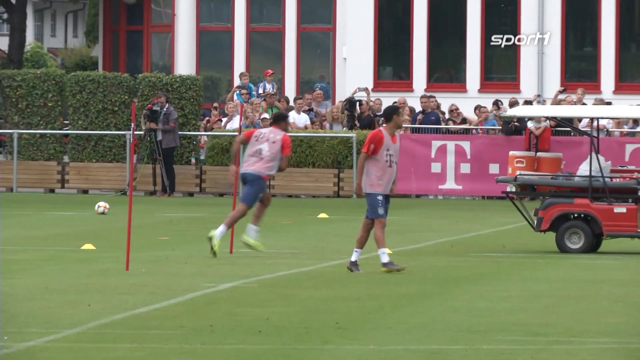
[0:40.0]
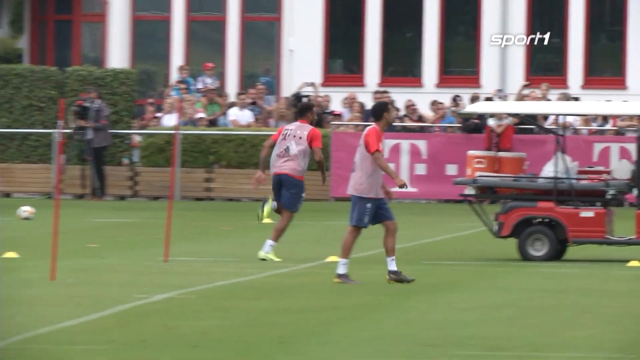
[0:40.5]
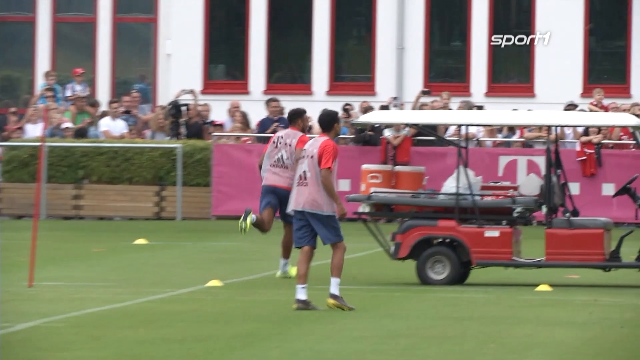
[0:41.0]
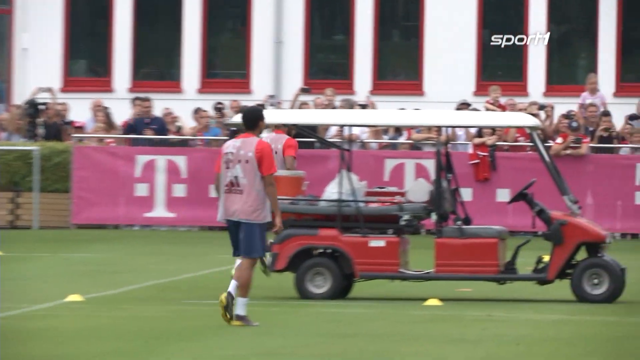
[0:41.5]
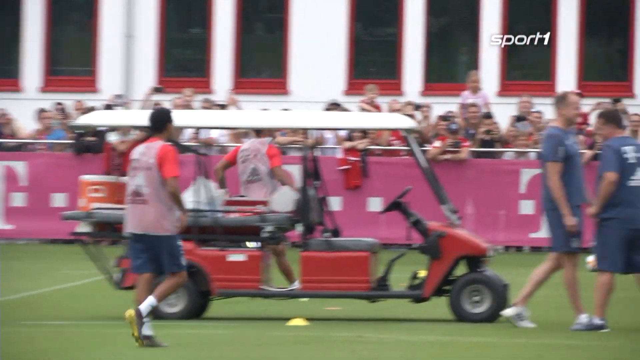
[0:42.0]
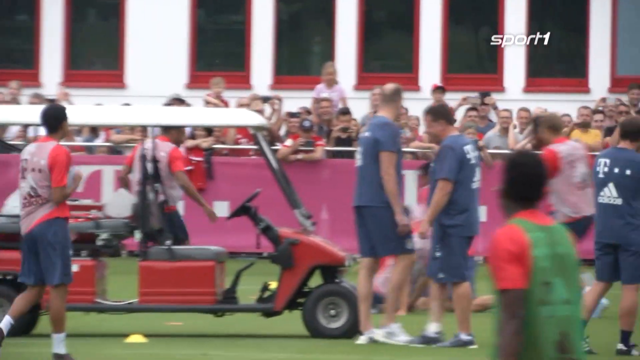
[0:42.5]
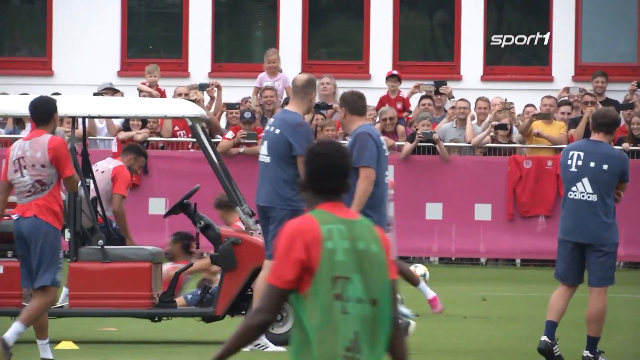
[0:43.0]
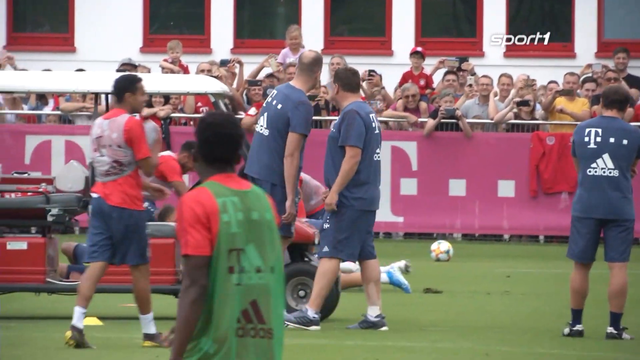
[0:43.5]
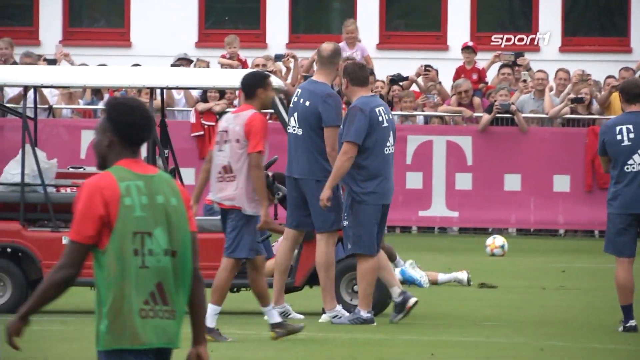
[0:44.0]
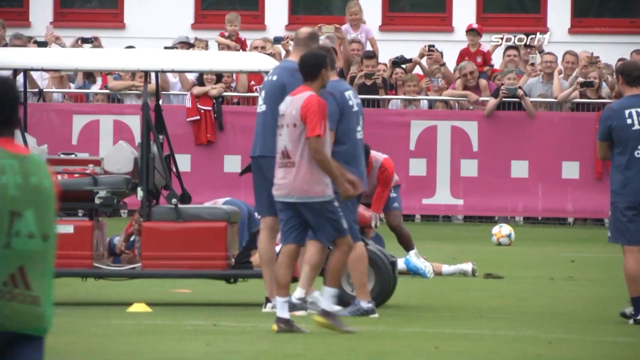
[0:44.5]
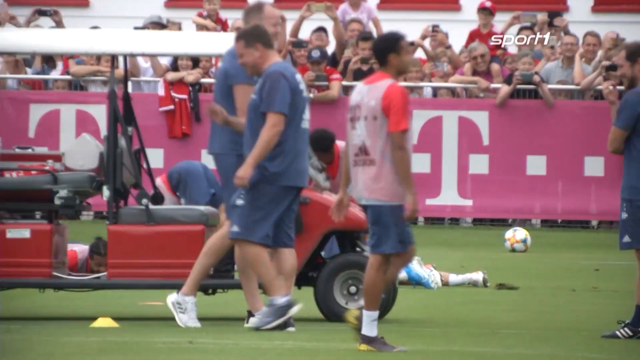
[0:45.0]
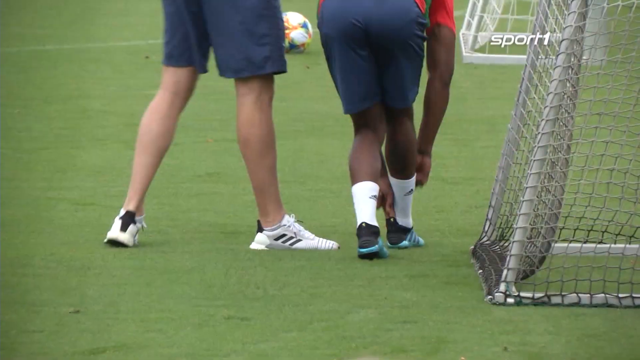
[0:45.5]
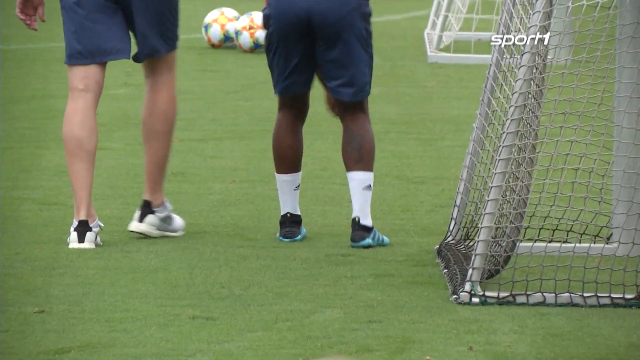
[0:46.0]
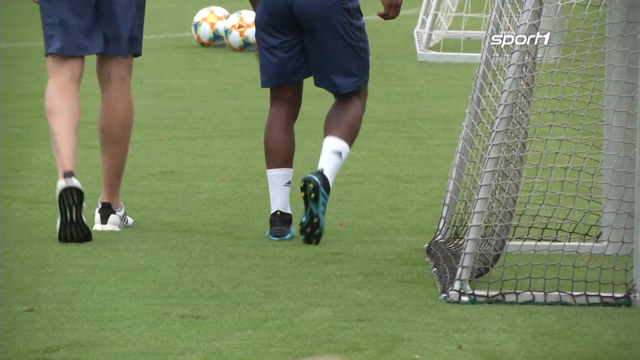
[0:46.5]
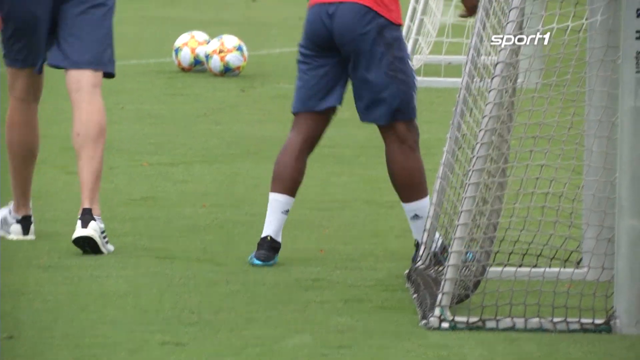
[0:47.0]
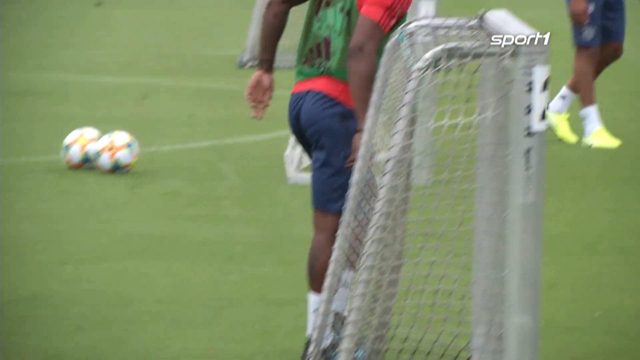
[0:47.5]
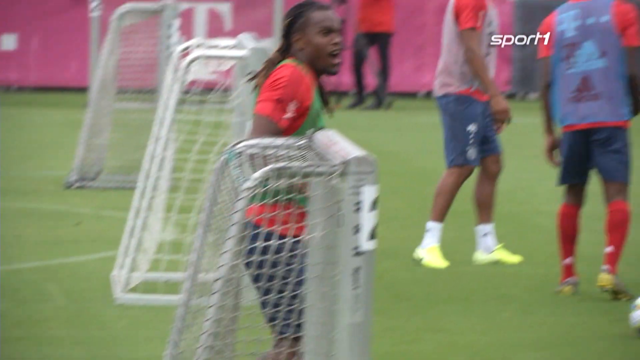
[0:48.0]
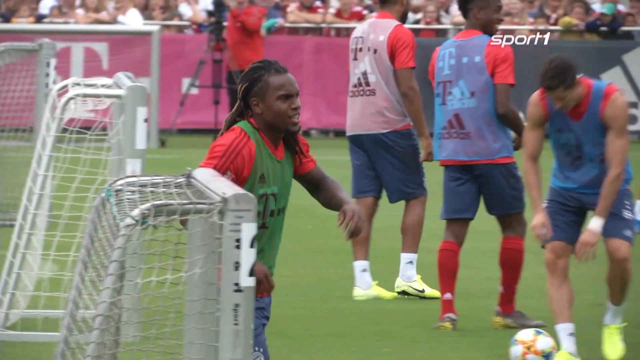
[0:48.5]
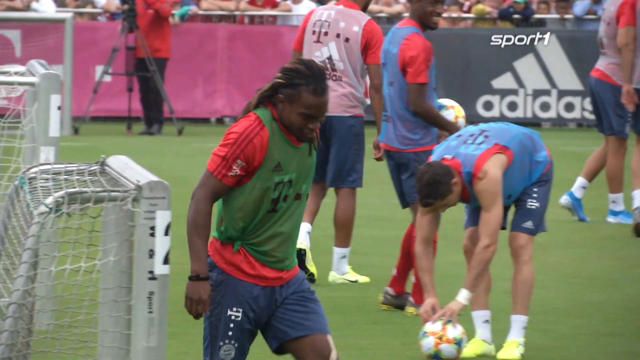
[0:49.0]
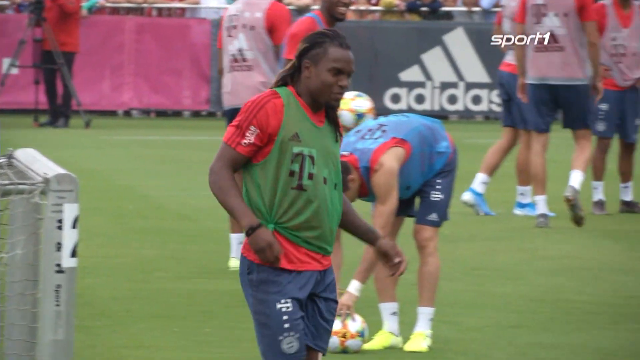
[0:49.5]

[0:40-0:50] A player who is training goes down on the ground and looks injured. He wears a green penny with a red shirt underneath, tied into a knot on his right side. A player runs, and there appears to be a slide tackle behind the training cart; maybe two or three players slide and end up on the ground during the play. It looks like a scrimmage or some type of drill. The camera shows the player getting up; he digs his right foot into the ground as he walks and looks like he might have an ankle injury. He limps but gets up and seems okay, with no apparently serious injury. A couple of soccer balls are in the background. Fans watch in the background; some smile and some use their phones to take pictures.